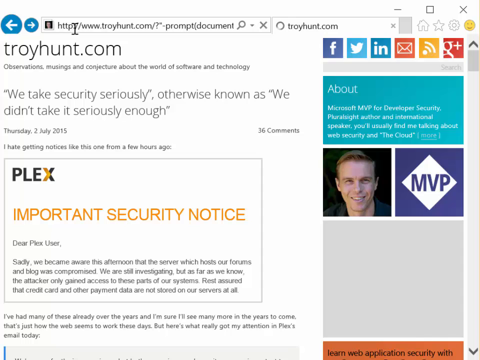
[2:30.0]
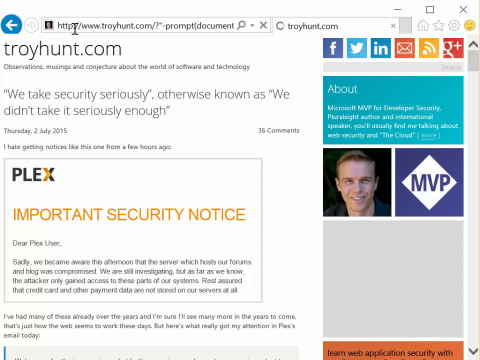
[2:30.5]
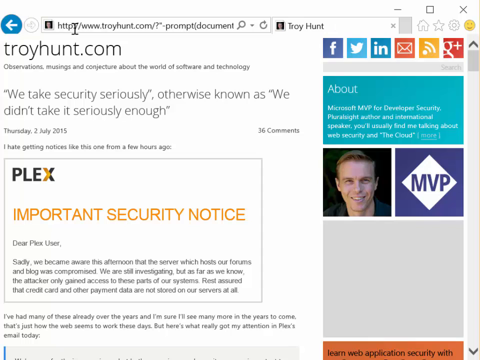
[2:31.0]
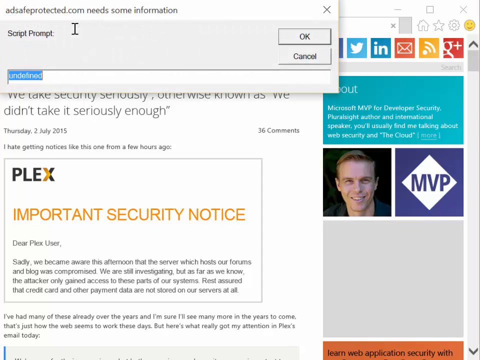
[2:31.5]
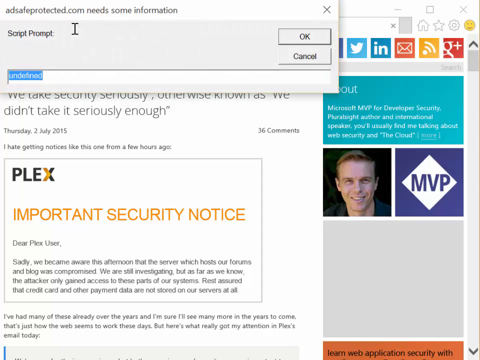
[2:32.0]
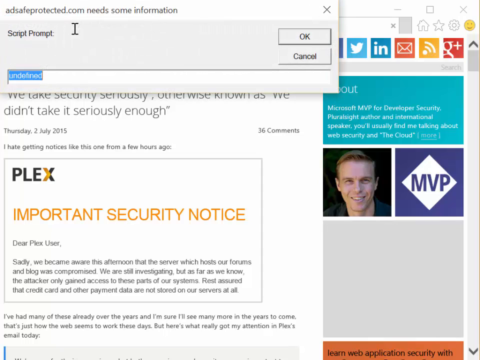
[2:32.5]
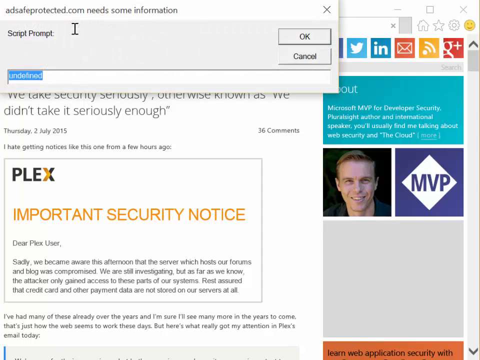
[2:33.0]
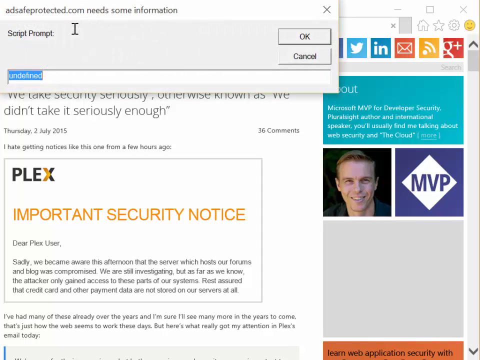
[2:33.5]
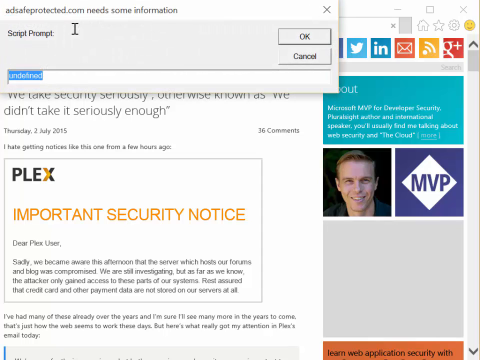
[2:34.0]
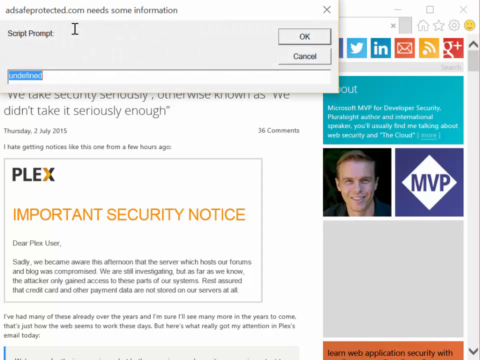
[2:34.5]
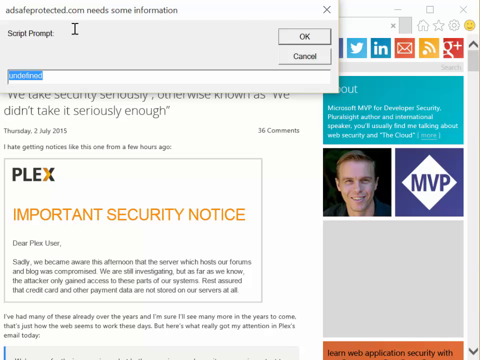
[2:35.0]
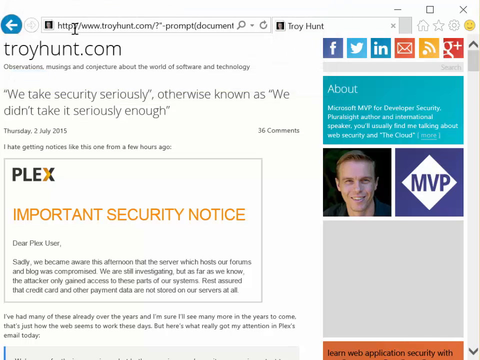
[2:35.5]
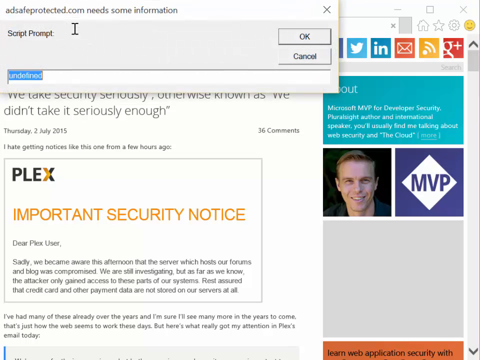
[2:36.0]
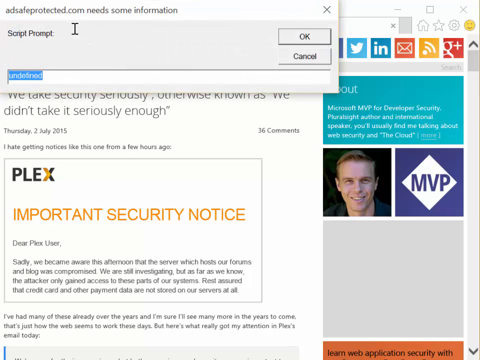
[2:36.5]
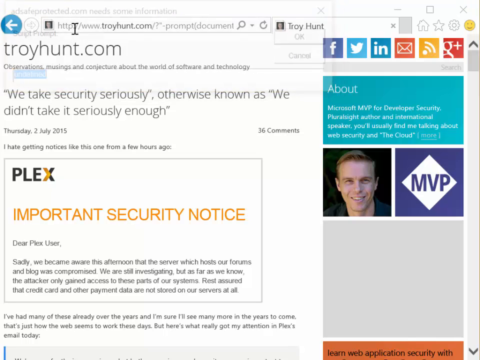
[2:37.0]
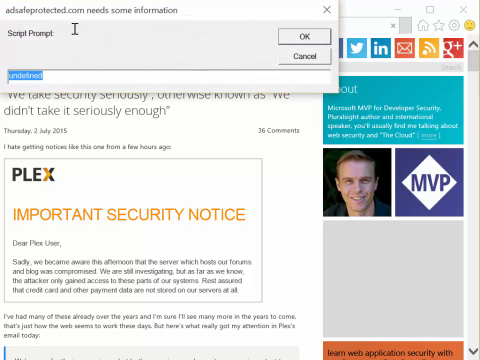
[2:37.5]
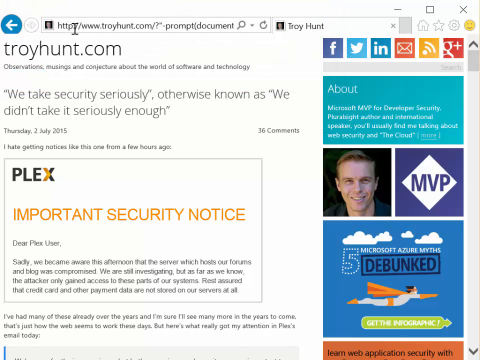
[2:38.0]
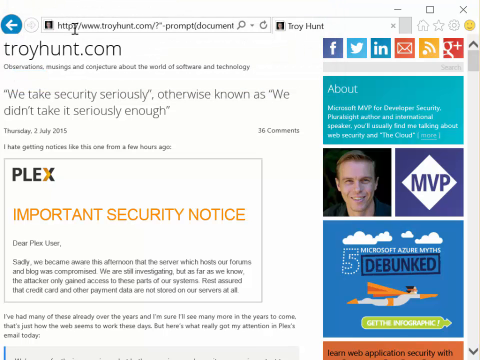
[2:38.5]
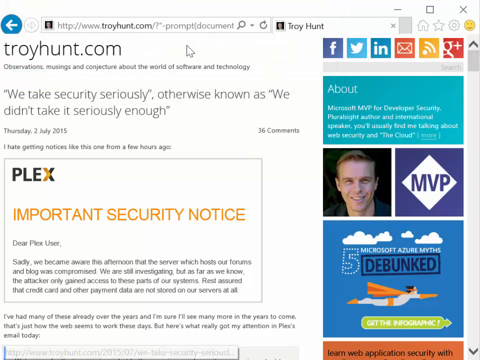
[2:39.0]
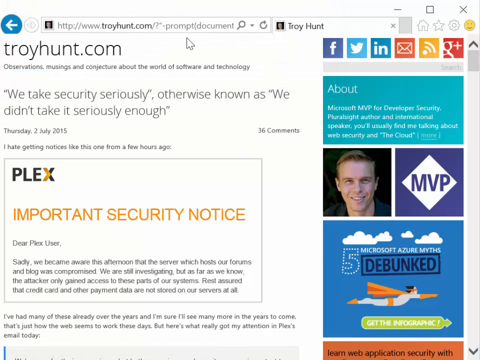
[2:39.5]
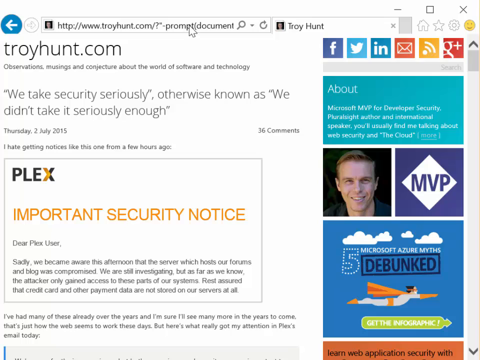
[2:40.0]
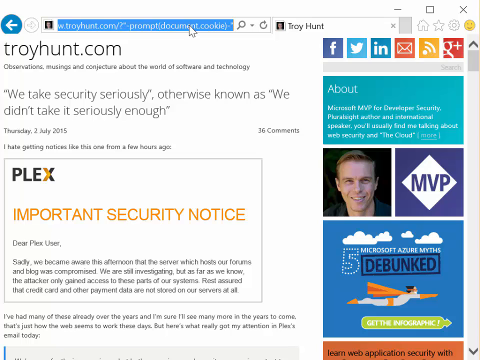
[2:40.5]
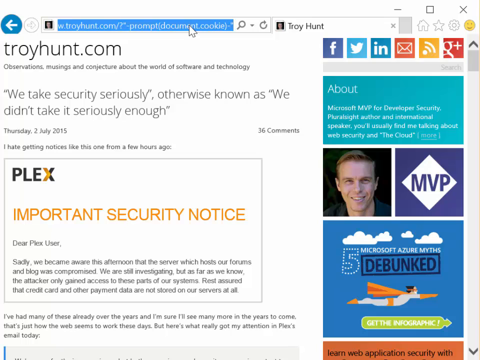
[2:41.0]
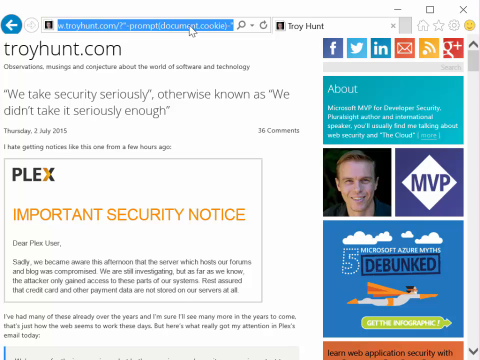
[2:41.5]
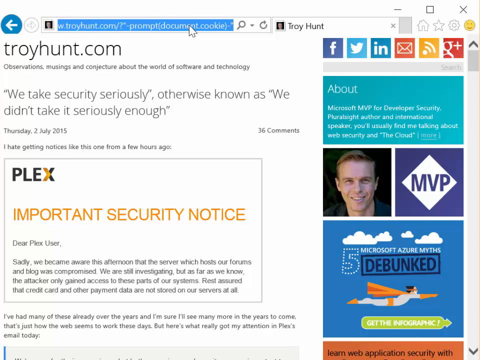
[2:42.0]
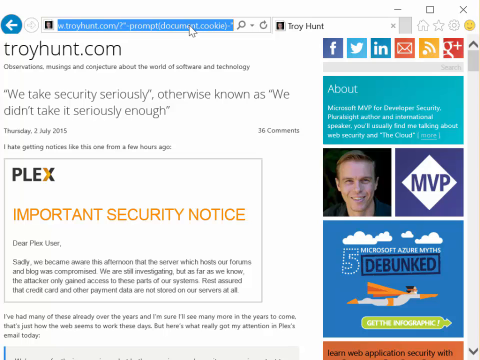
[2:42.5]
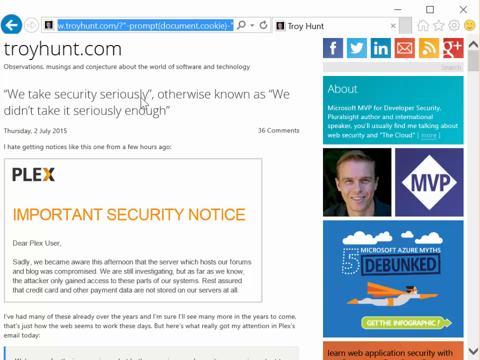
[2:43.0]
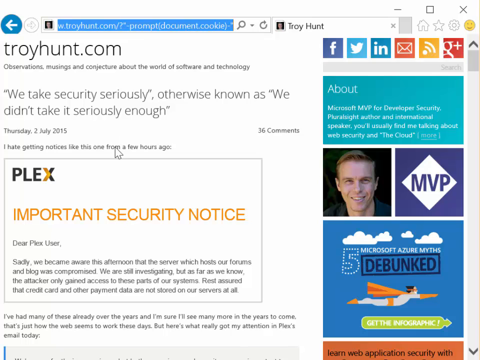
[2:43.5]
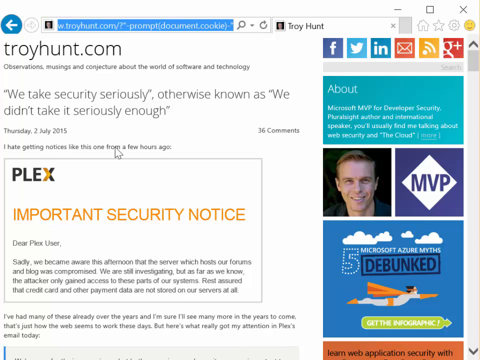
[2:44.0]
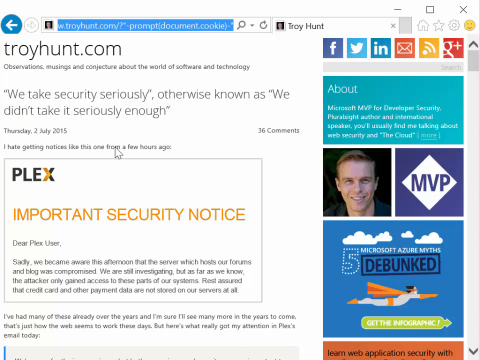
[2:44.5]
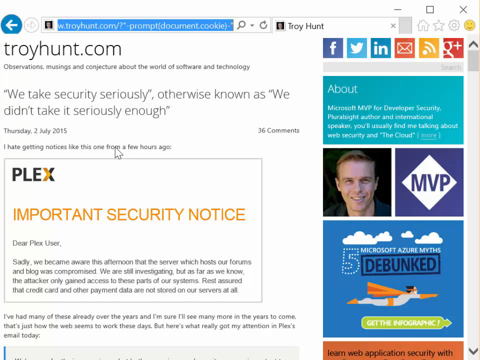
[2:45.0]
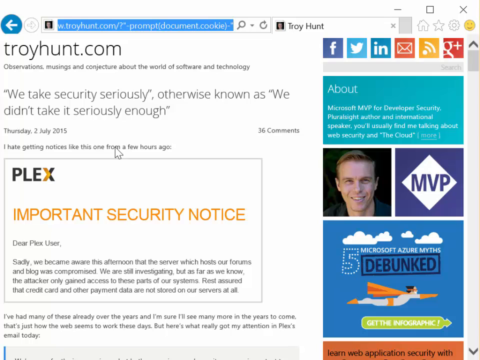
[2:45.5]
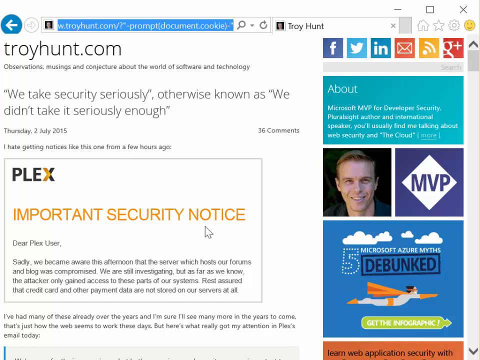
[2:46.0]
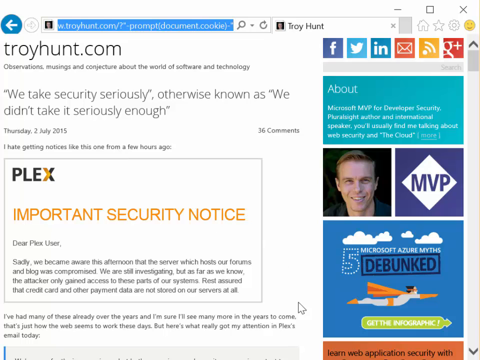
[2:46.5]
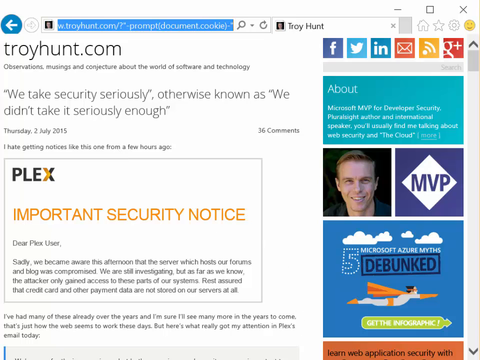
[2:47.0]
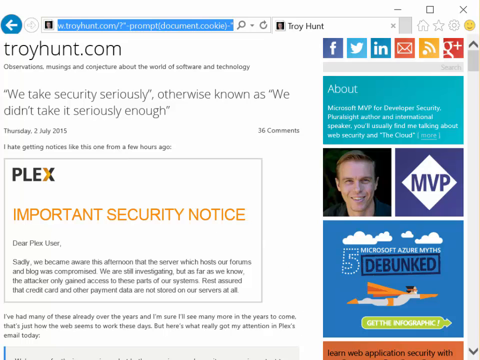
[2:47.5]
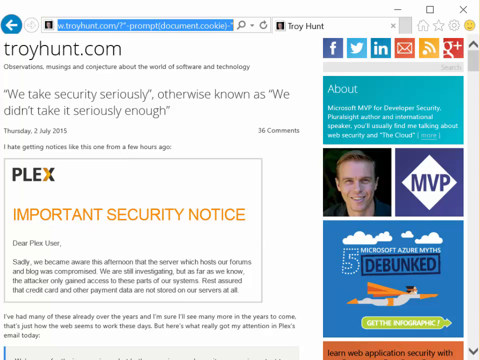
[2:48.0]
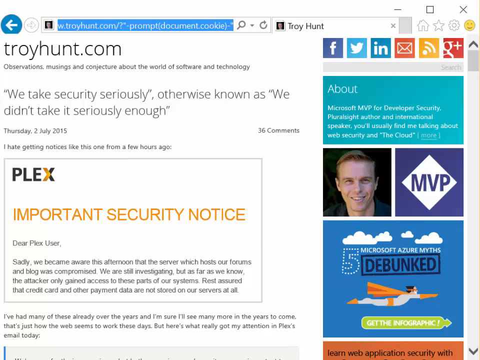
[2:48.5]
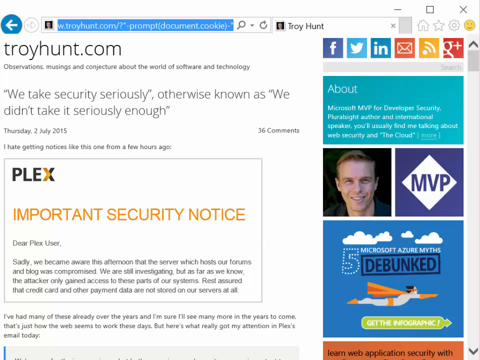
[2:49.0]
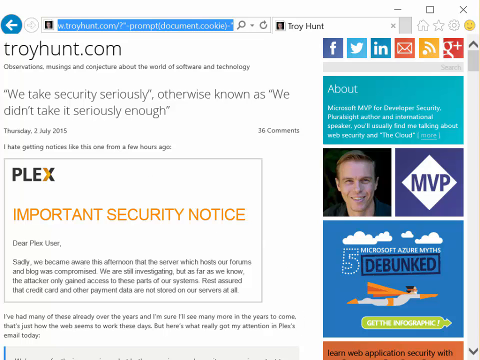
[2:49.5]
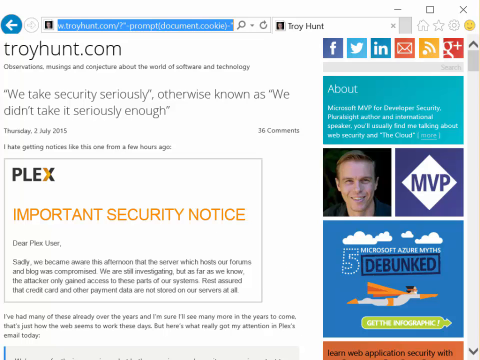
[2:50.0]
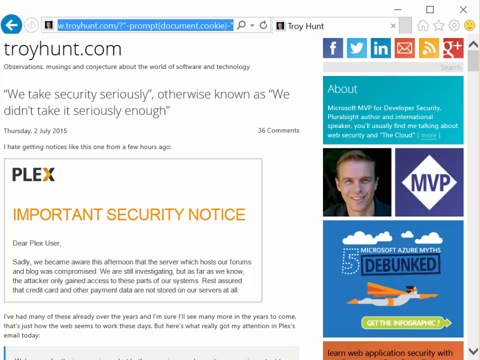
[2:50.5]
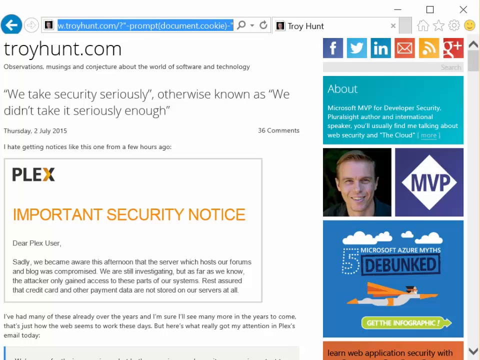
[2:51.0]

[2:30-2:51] The user is still on the troyhunt.com website. A script prompt pop-up appears with text including "need some information" and "script prompt," and a field at the bottom reading "undefined." The person appears to close it, open it again, and close it once more. They then highlight all of the text in the address bar. The page also shows a couple of articles; one in the bottom right-hand corner reads "Azure myths debunked" and has a picture of what looks like a superhero flying in a gray and orange superhero costume. The user appears to keep typing different options into the address bar.